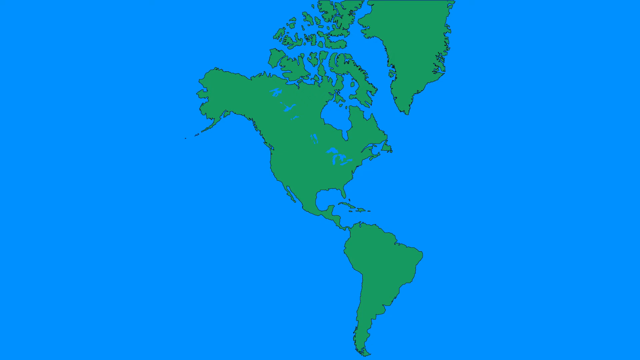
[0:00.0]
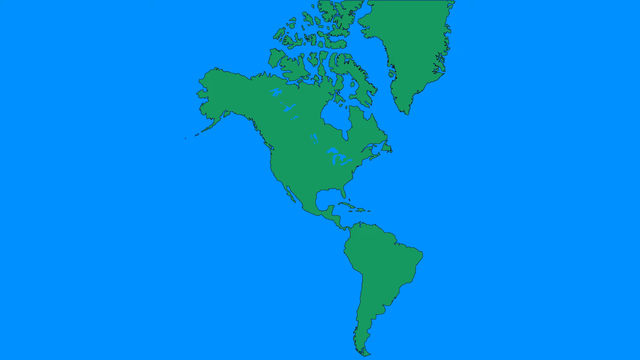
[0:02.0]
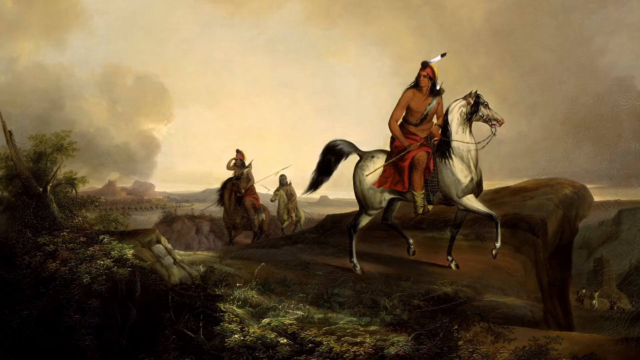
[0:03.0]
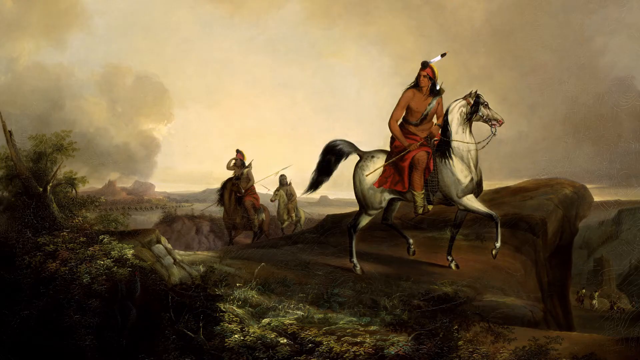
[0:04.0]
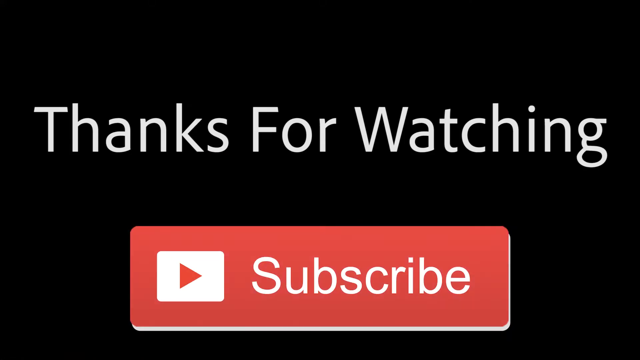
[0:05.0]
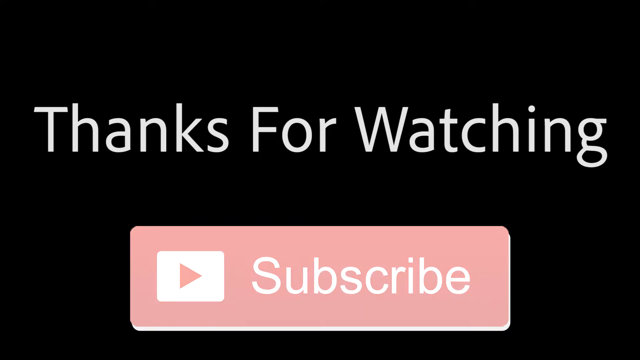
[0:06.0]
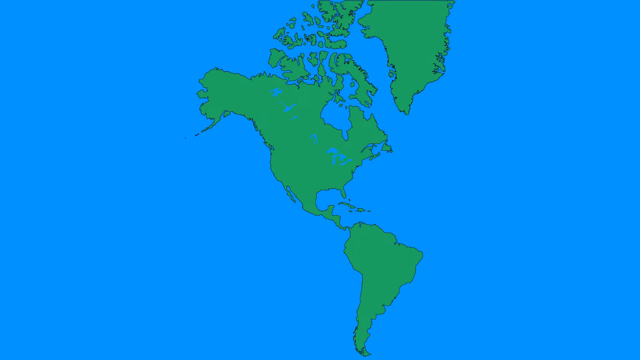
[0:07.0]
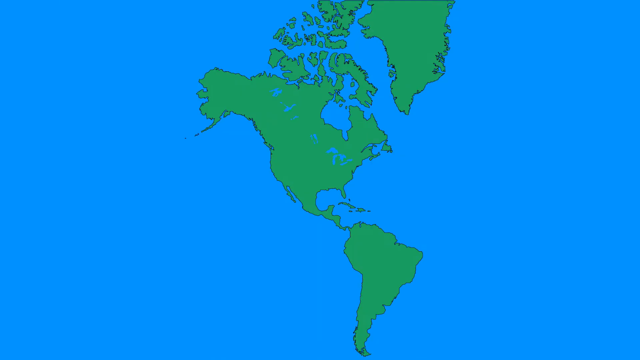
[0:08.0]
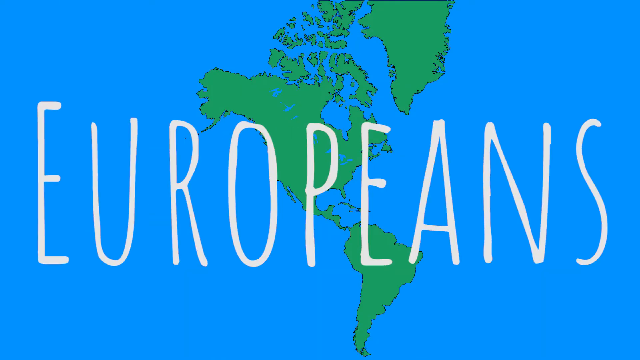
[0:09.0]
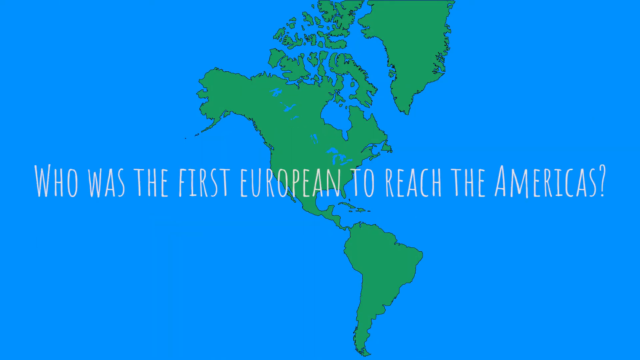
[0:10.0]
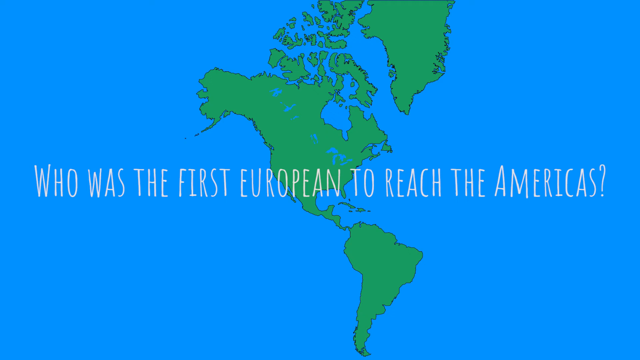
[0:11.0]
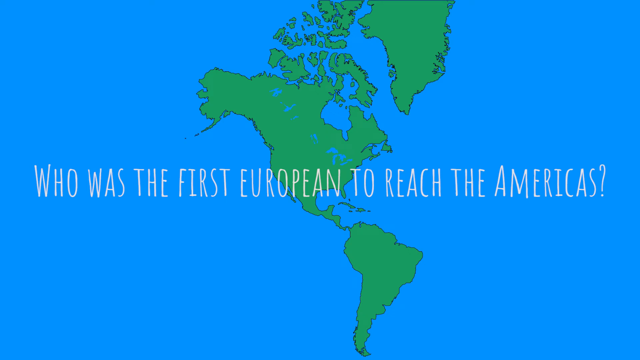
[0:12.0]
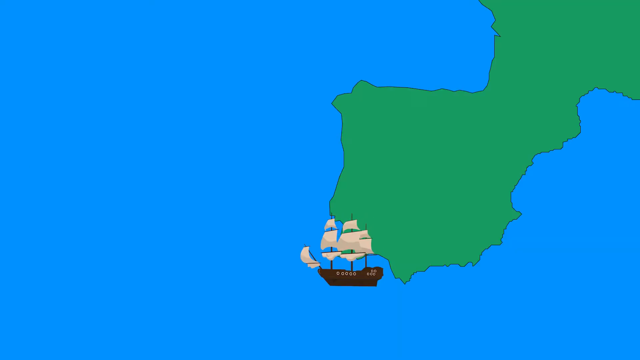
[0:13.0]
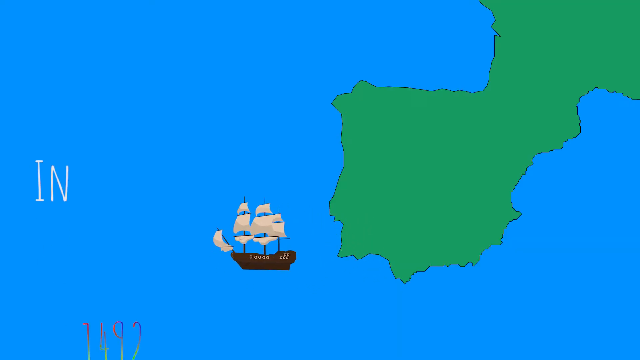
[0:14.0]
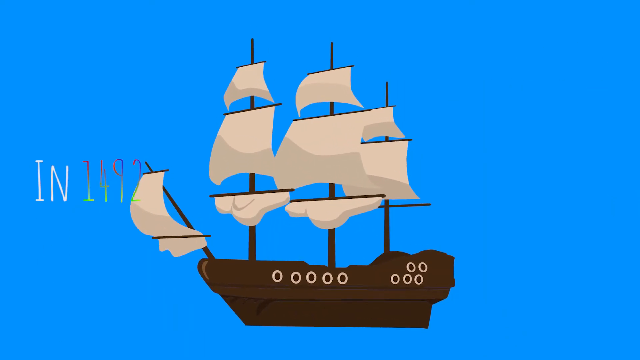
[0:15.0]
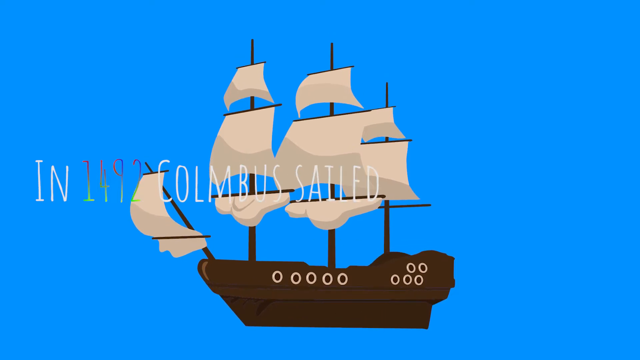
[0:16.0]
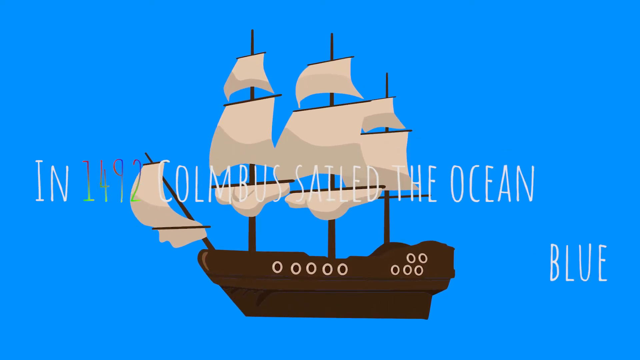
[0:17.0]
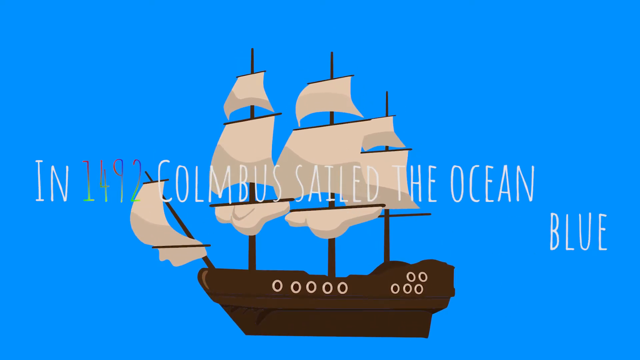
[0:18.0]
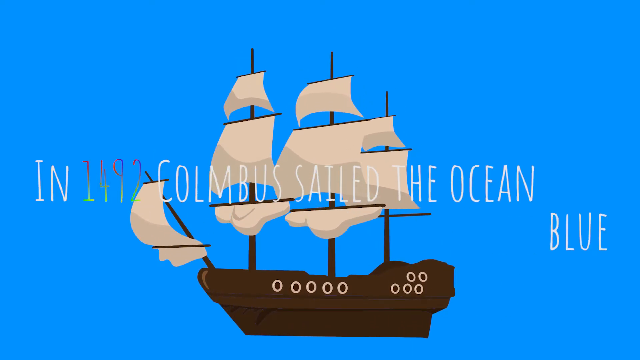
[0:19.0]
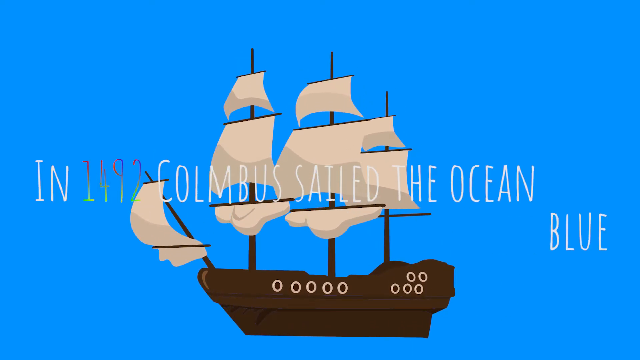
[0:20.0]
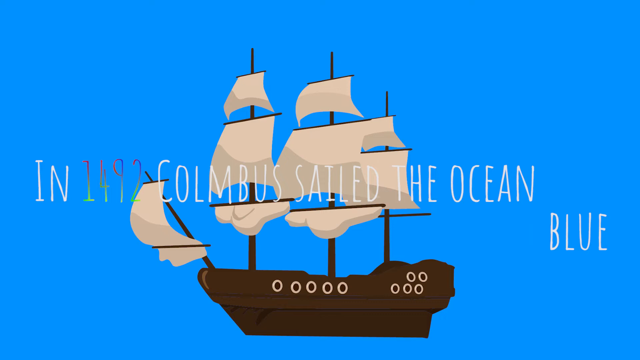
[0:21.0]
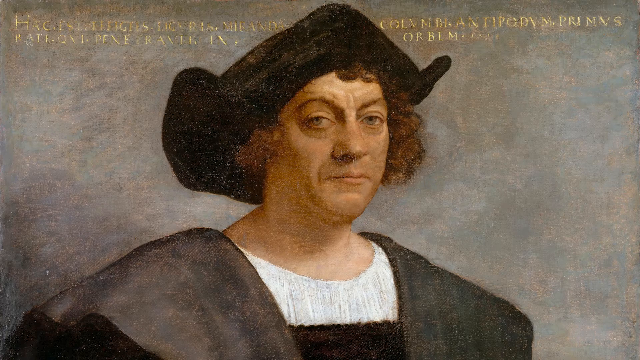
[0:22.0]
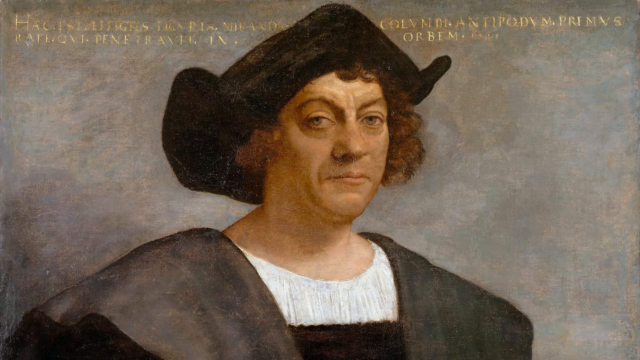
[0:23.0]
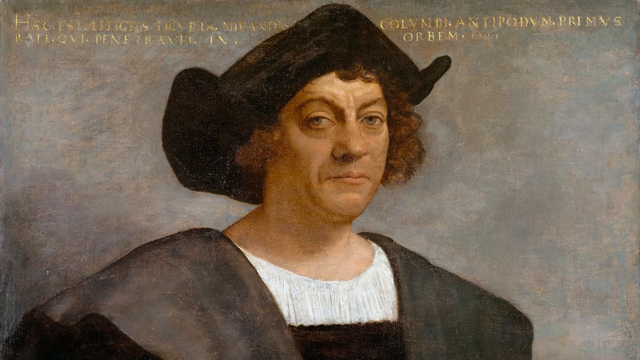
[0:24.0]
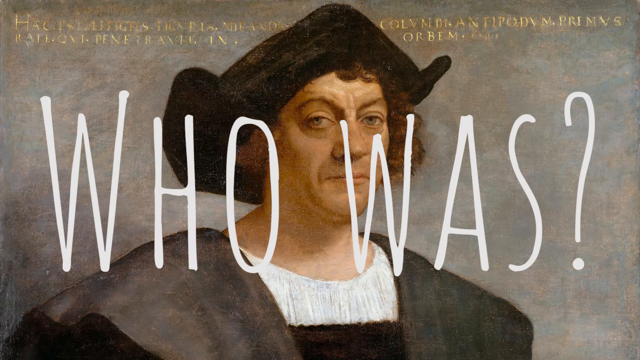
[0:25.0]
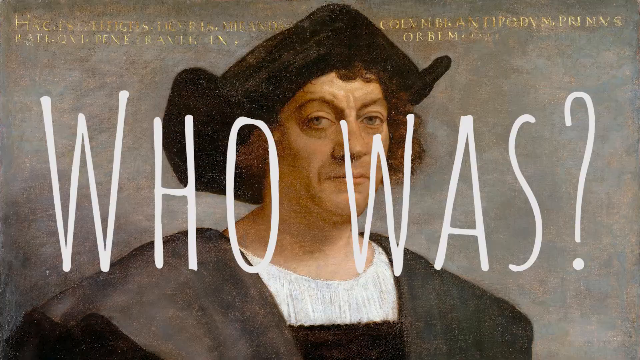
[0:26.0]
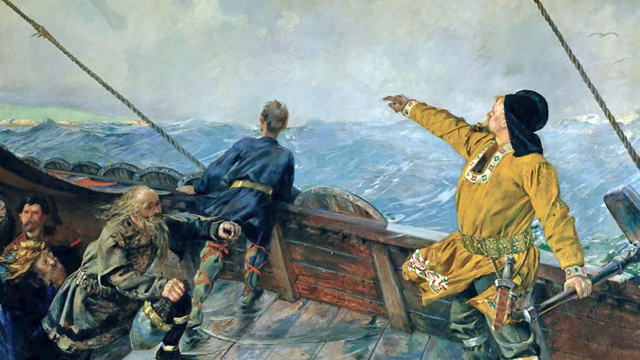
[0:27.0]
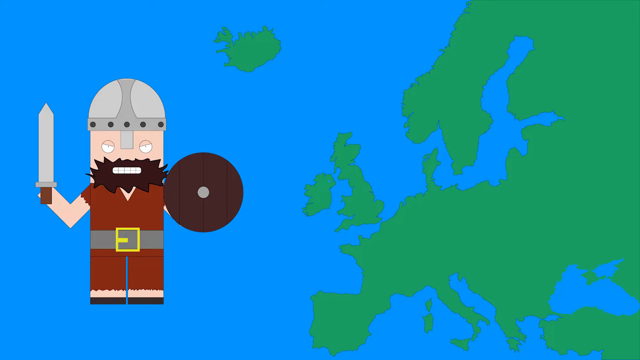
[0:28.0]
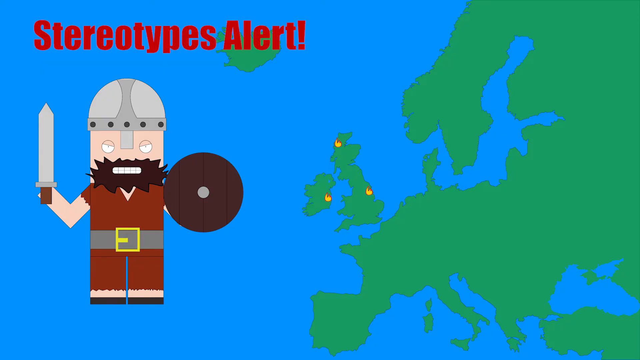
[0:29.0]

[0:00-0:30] The video opens on a cartoon-style map of the United States, showing North America and South America, with Greenland up to the right. Next comes a painting that looks like it shows Indians out on the plains of the United States. An Indian riding a white horse is in the front, with one feather sticking out of his headband, and two other Indians ride horses in the distance behind him. A screen with a black background then appears with white words that say "thanks for watching," and below that is the red YouTube subscribe button. A view of the United States, North America, South America and Greenland follows, with the word "Europeans" on the screen and the question "Who was the first European to reach the Americas?" Then a boat appears with the text "in 1492, Columbus sailed the ocean blue" across the screen. The boat has several sails and looks like a wooden sailing boat.